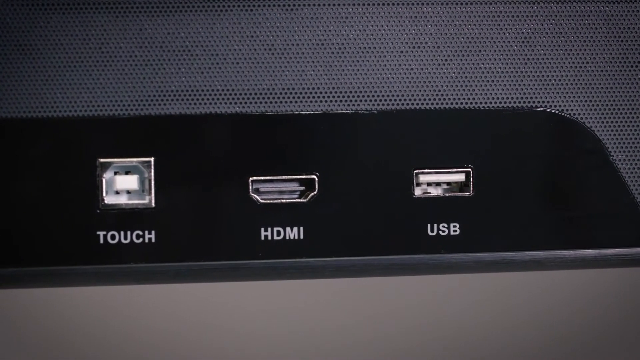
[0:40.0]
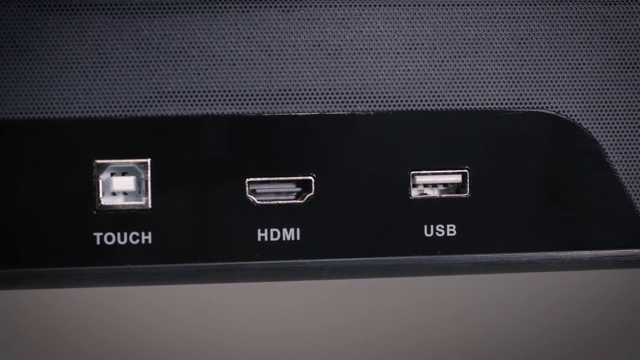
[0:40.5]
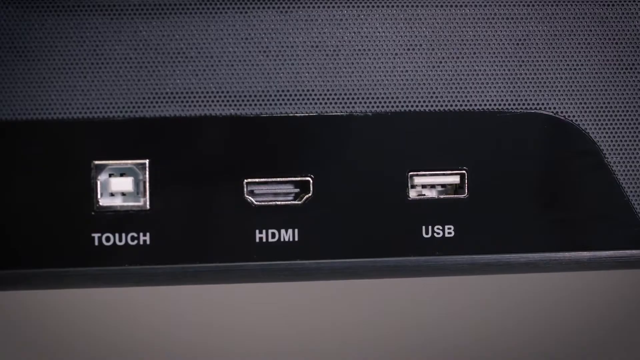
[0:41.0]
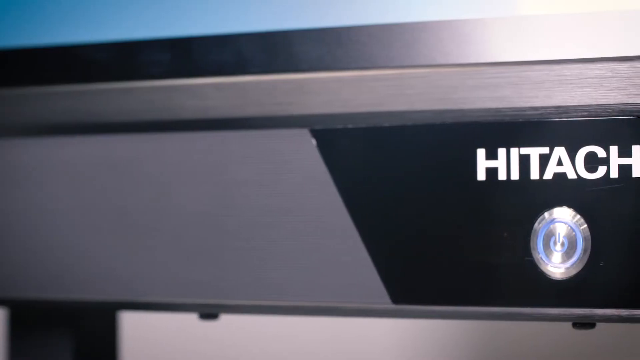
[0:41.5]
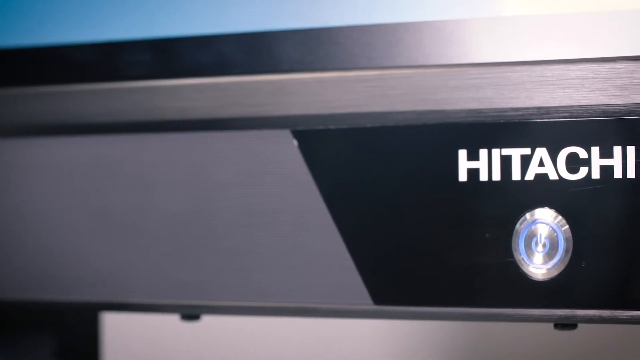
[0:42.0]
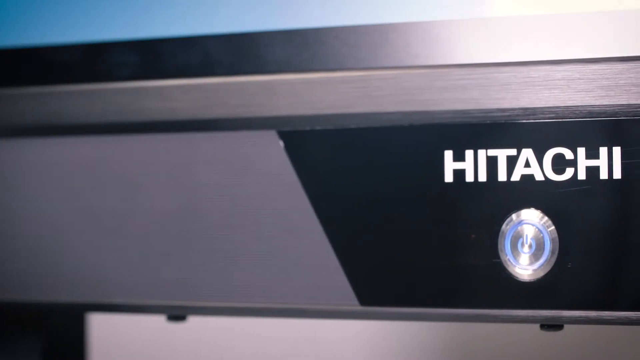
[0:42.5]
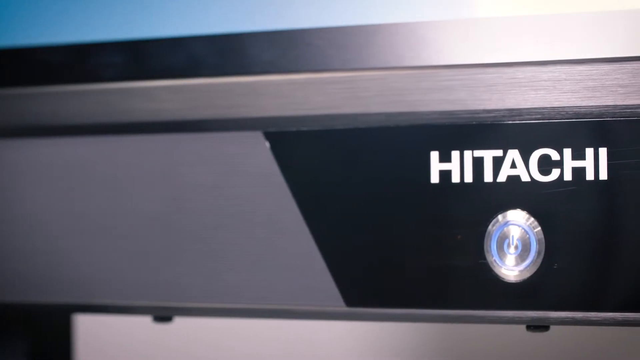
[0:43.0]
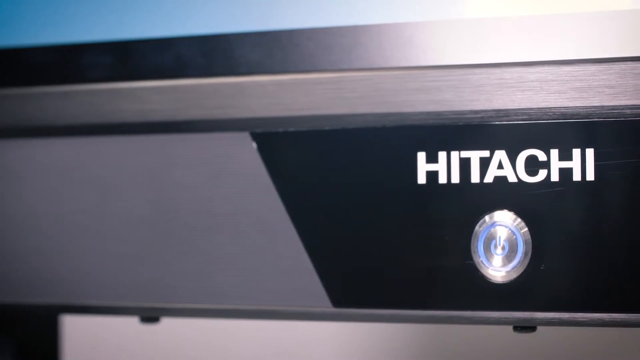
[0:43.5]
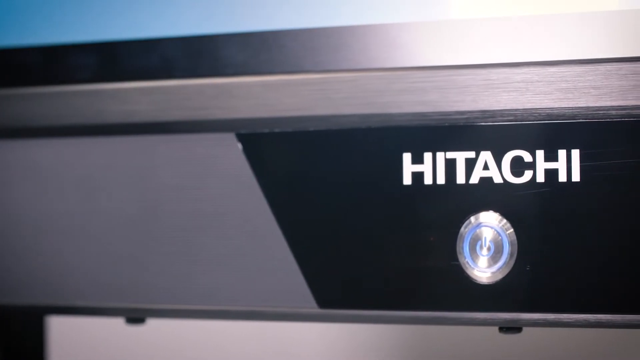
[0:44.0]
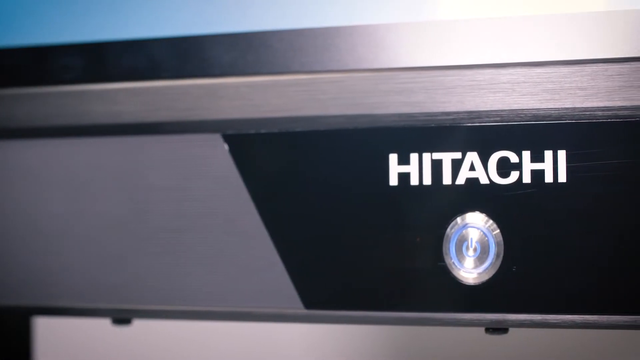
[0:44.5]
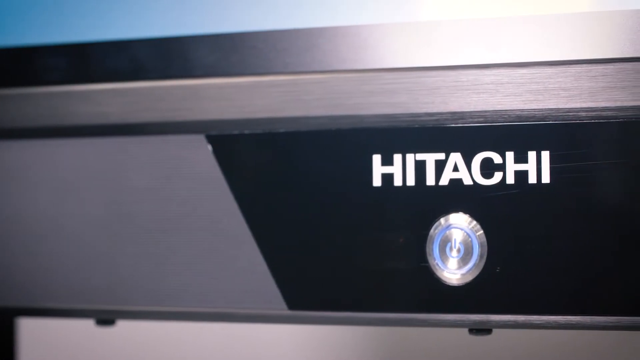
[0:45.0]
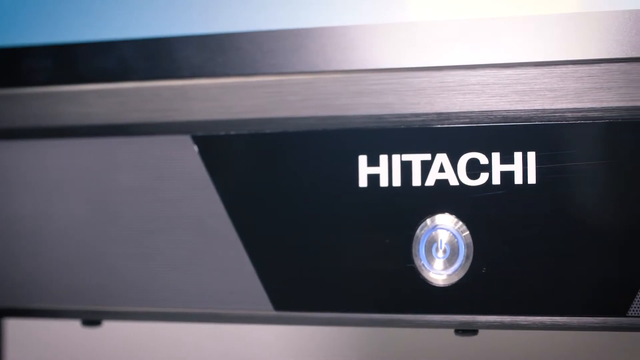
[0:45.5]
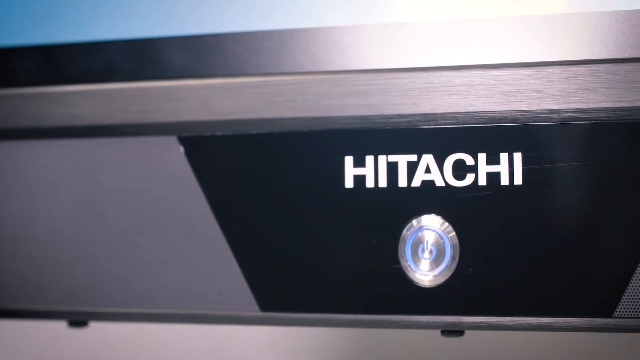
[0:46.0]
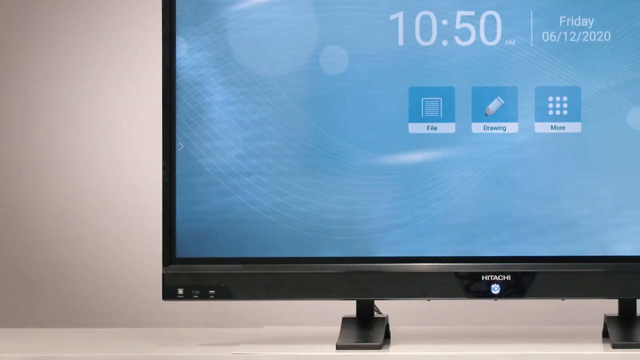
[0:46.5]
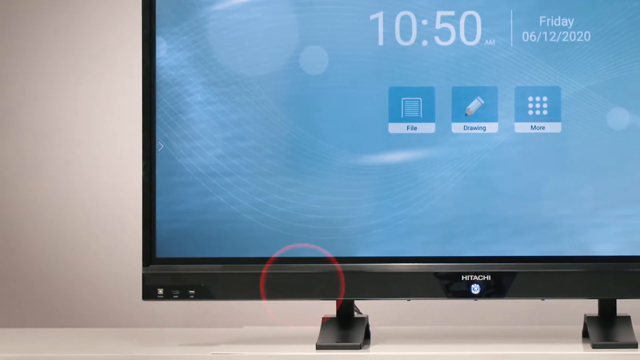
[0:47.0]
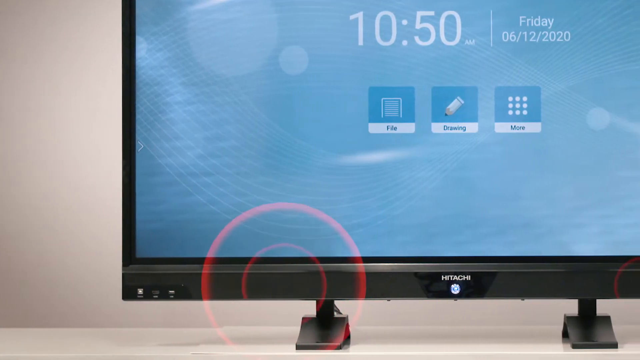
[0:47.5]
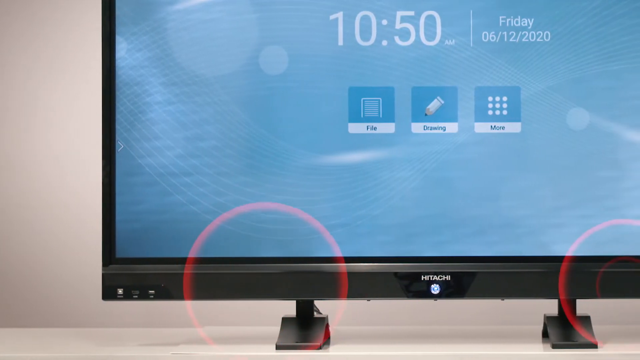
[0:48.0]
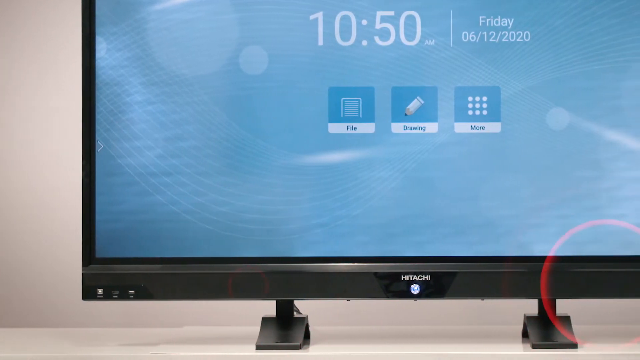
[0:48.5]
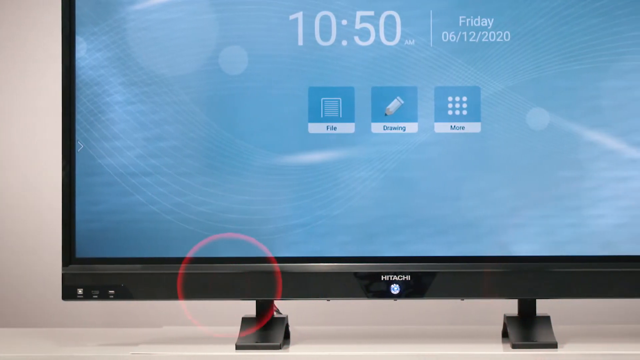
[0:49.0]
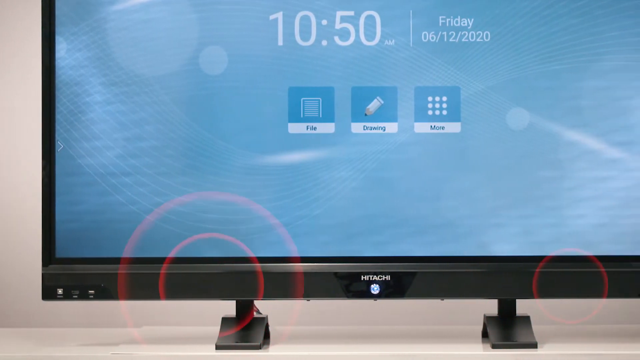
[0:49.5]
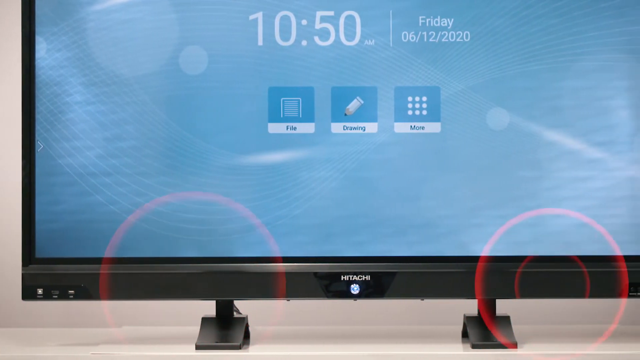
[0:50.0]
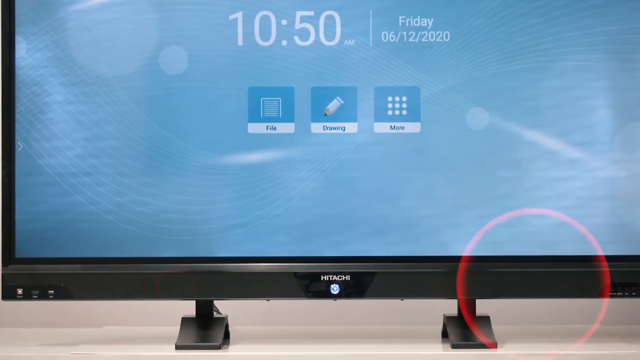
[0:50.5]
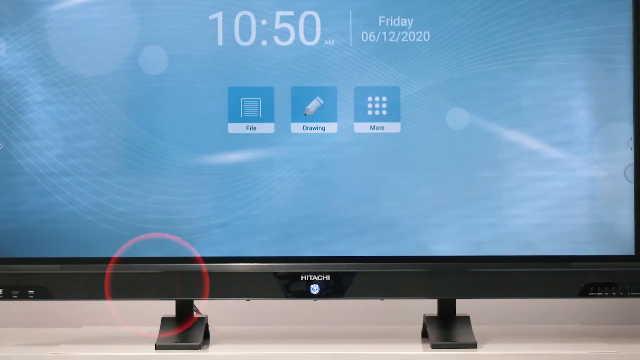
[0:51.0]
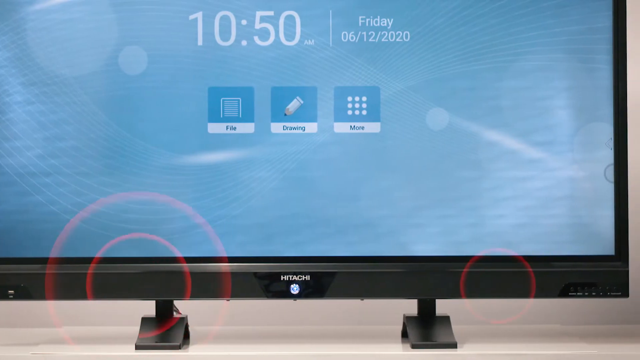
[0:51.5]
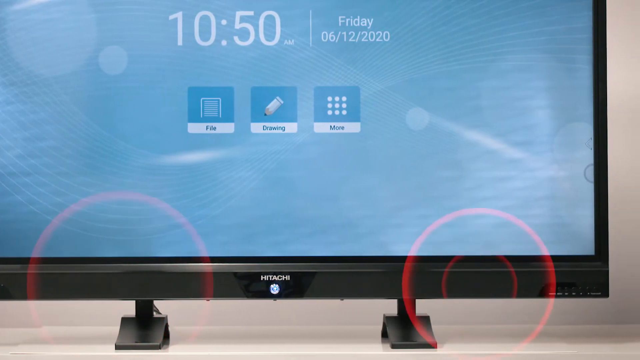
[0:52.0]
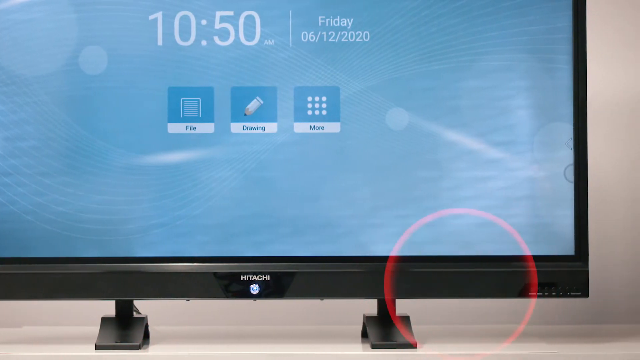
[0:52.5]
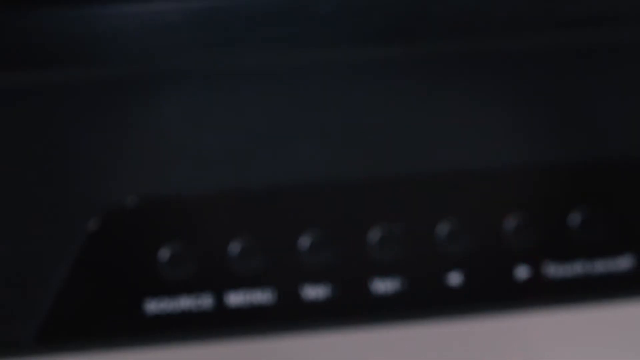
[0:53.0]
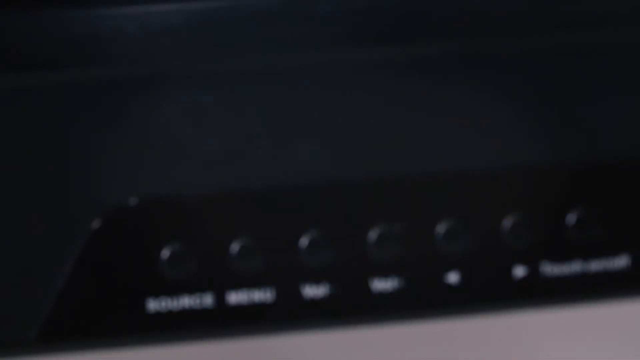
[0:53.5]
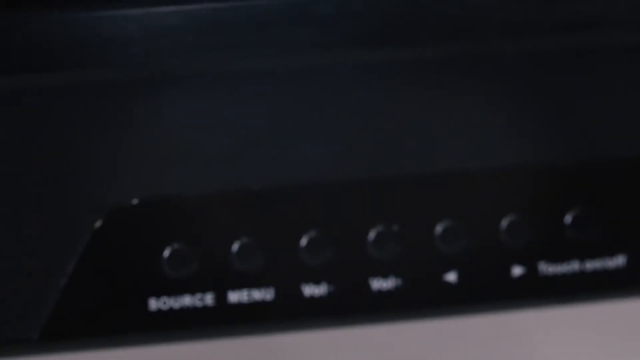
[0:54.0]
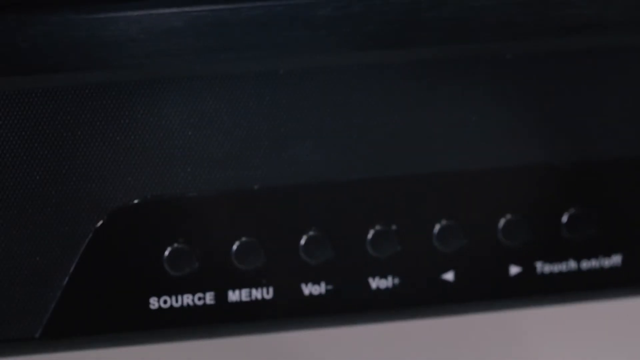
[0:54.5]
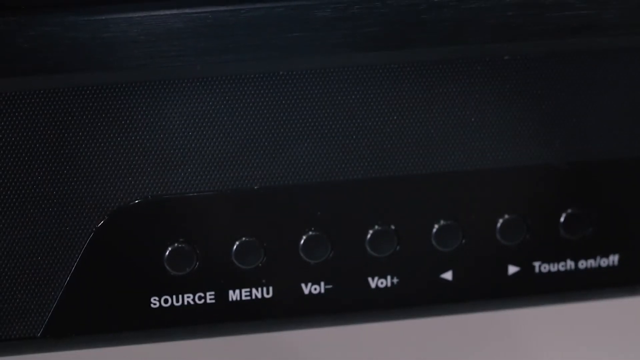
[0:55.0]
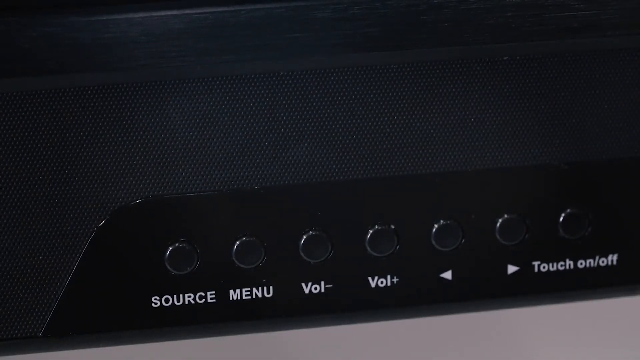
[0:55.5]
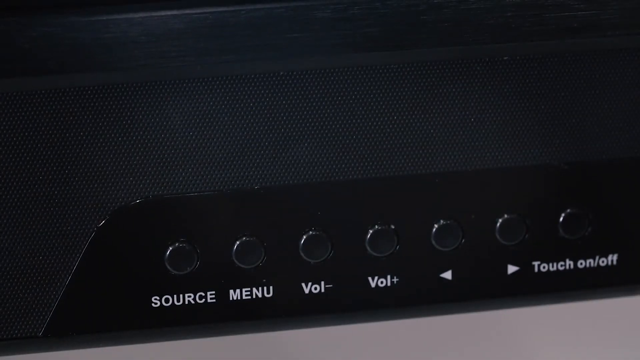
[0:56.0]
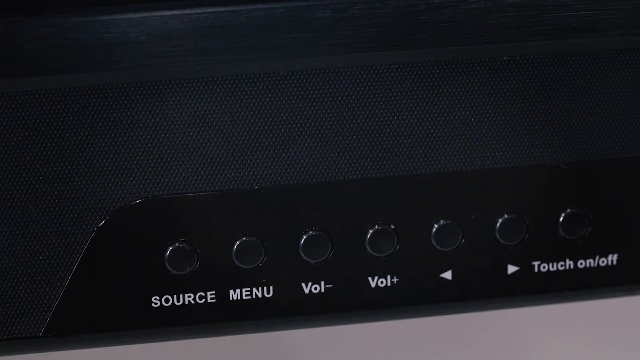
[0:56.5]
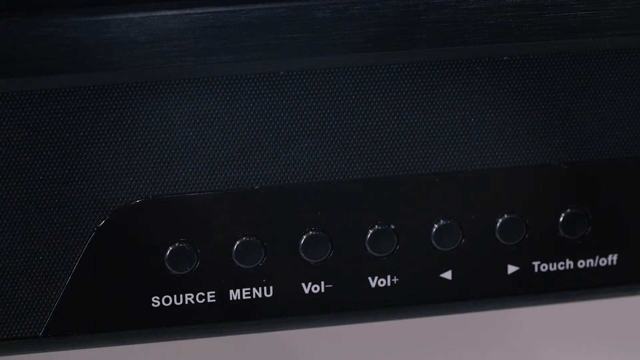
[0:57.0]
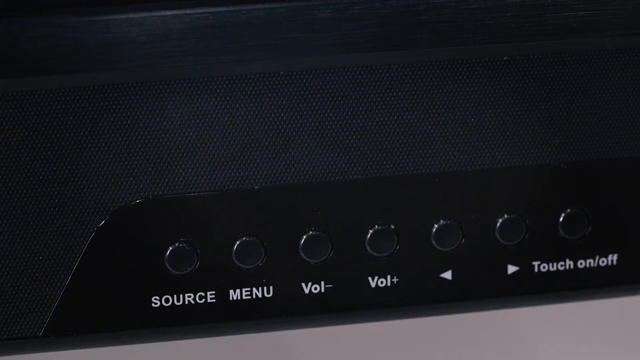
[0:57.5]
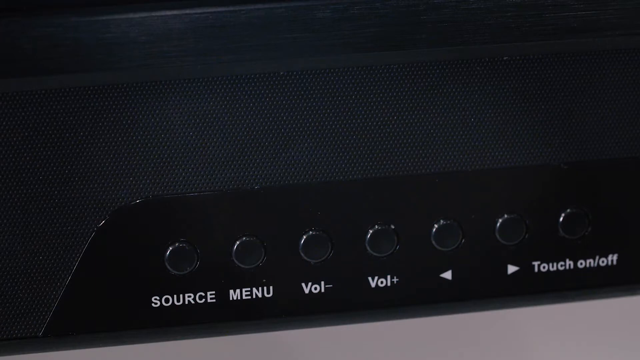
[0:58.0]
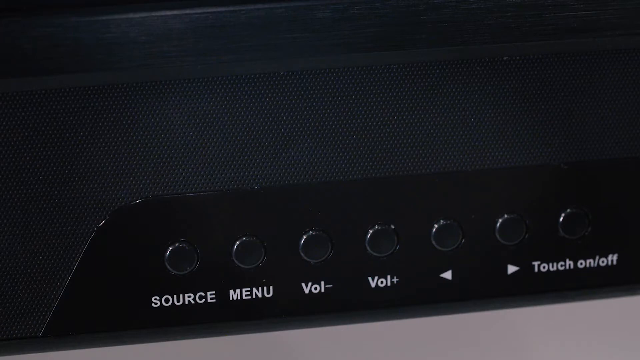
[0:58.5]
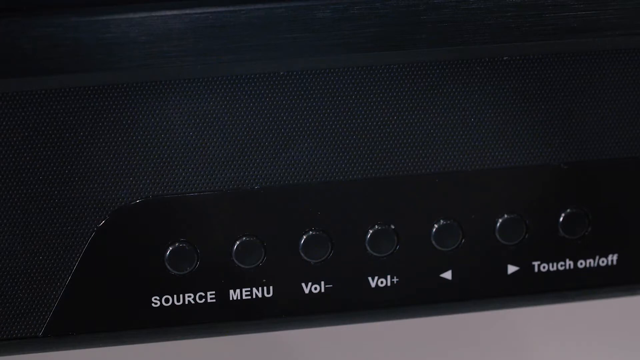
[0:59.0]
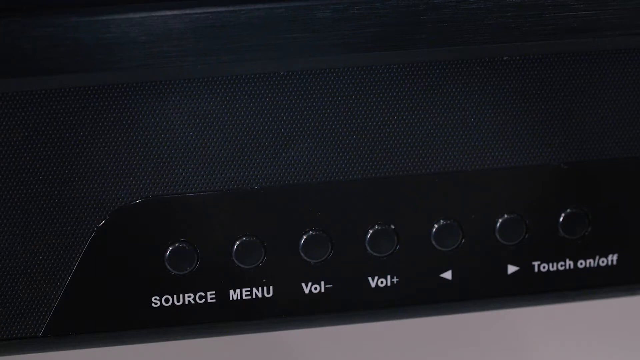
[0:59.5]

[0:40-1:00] The video shows the design, the edges and the lighting system of the product, along with its keys: the source key, the menu key, volume down, volume up, the navigation key and the on/off button. There is a touch button with what looks like a Thunderbolt logo, and a power light. The screen displays the time "10 50 a.m friday 6th of december 2020," along with a file and a drawing. The product is black, probably plastic, and has stands. It could be a TV or a monitor.